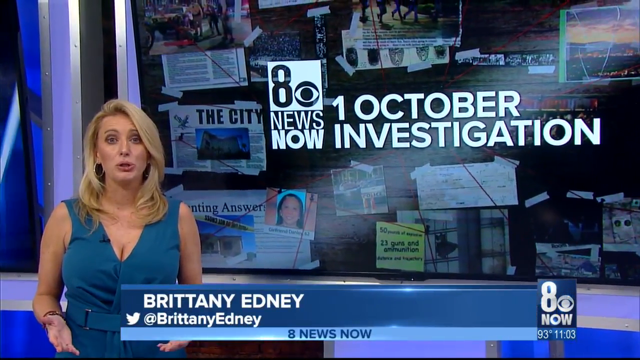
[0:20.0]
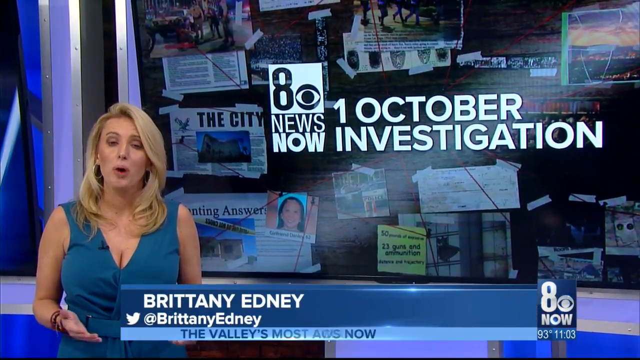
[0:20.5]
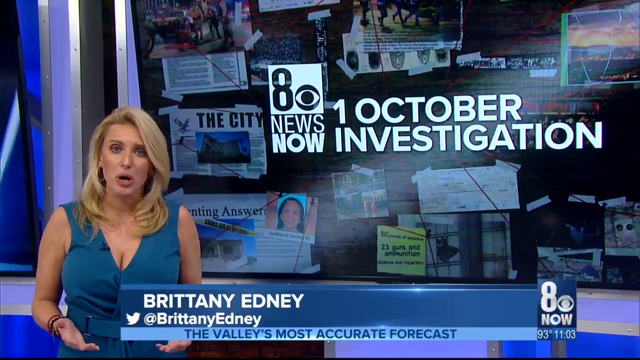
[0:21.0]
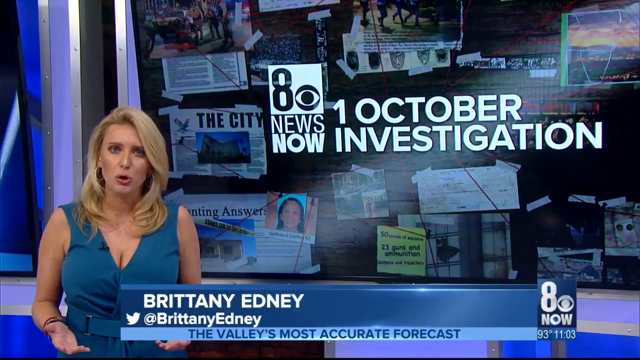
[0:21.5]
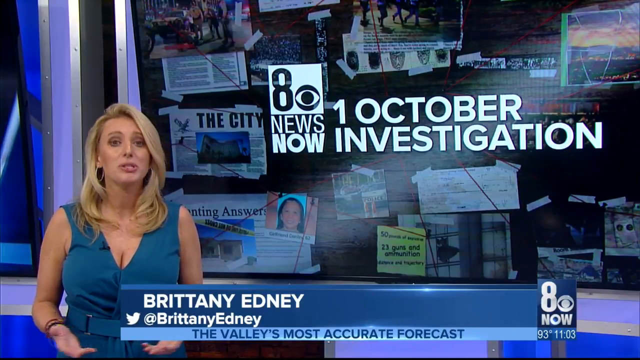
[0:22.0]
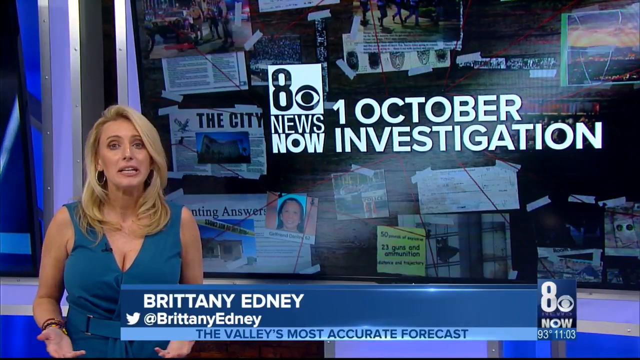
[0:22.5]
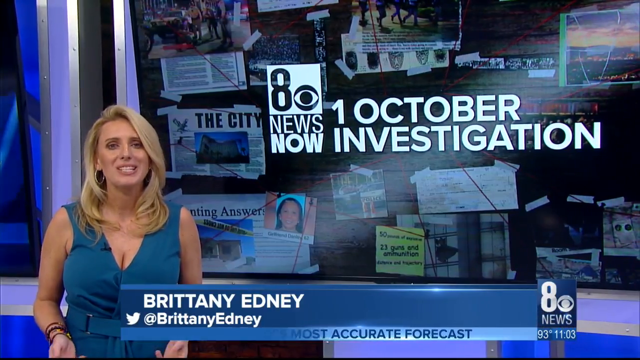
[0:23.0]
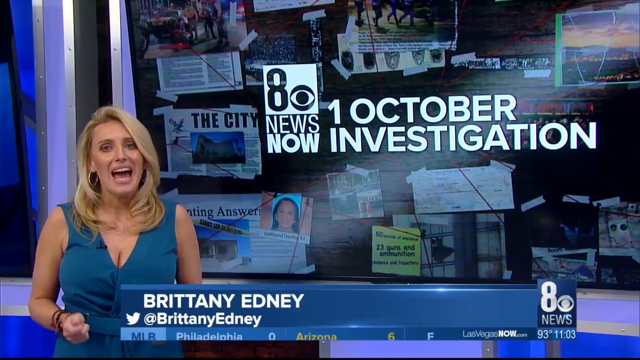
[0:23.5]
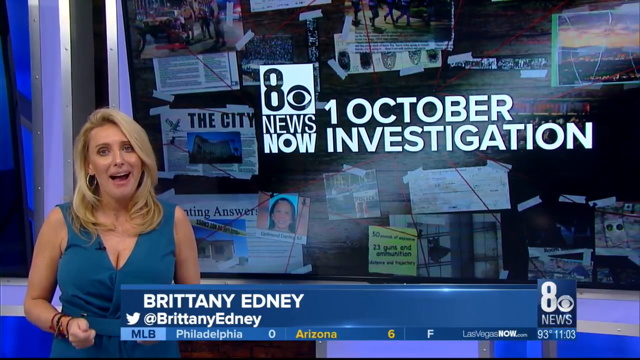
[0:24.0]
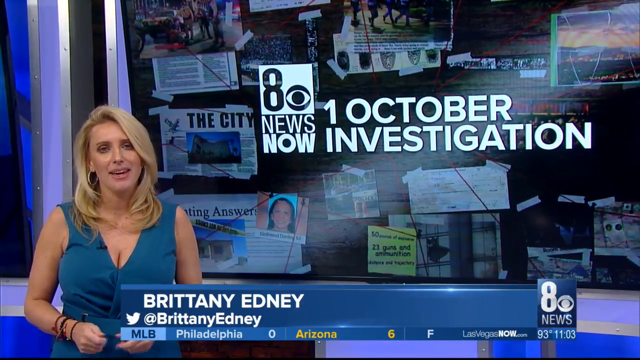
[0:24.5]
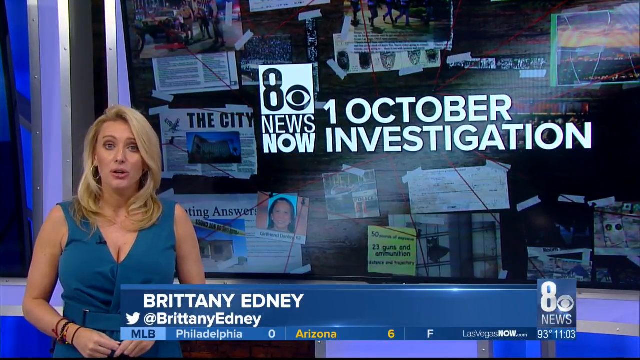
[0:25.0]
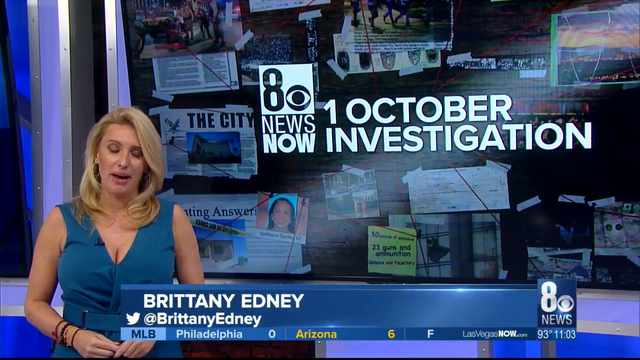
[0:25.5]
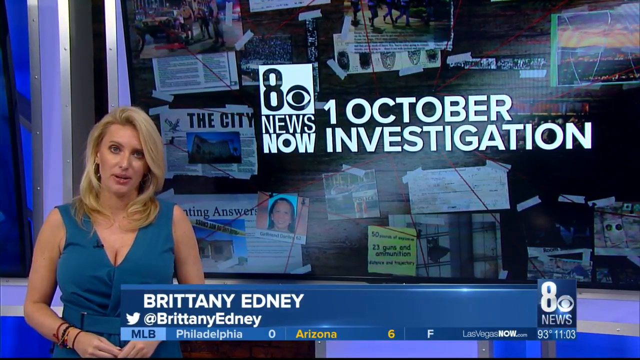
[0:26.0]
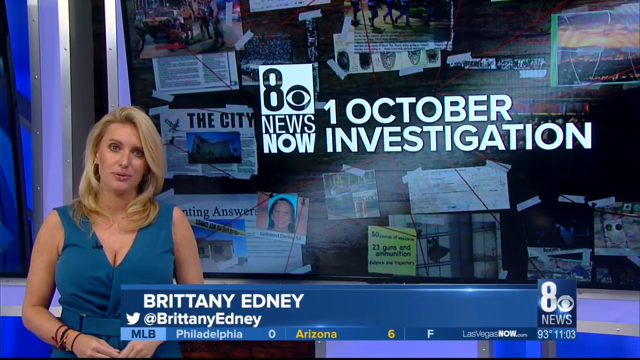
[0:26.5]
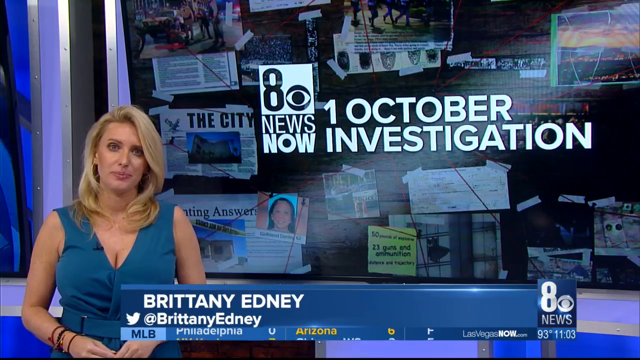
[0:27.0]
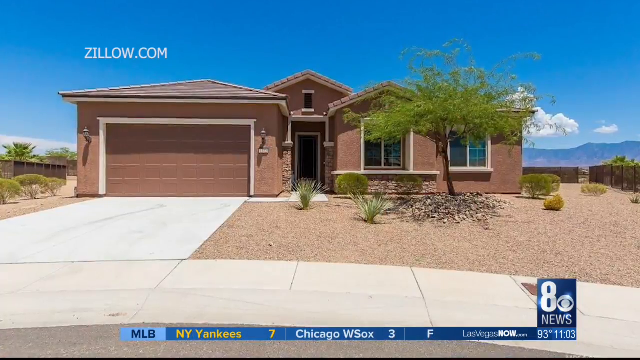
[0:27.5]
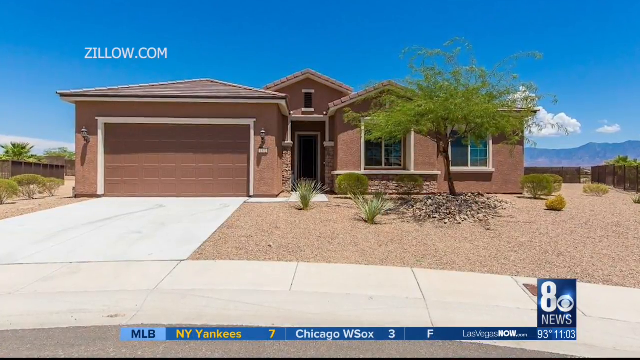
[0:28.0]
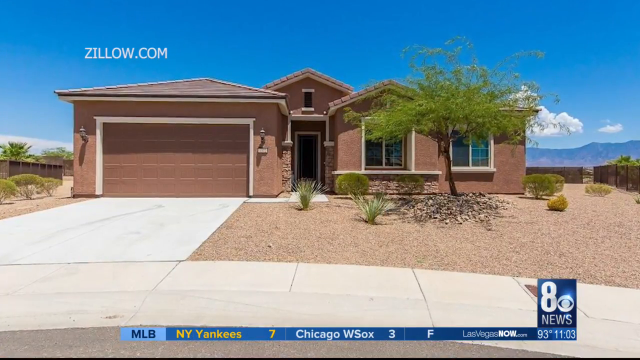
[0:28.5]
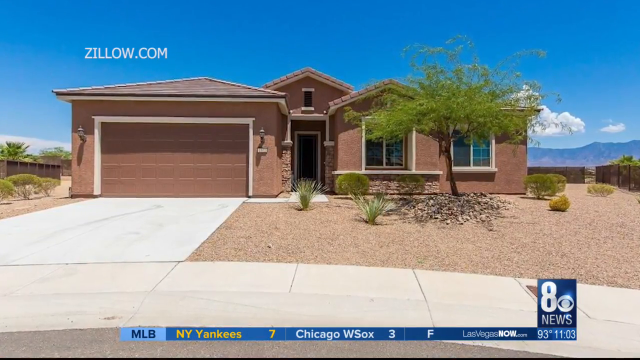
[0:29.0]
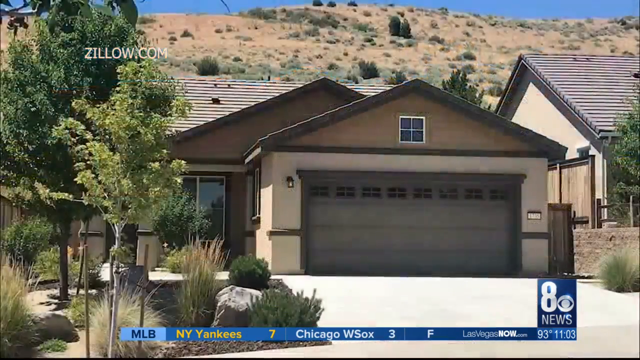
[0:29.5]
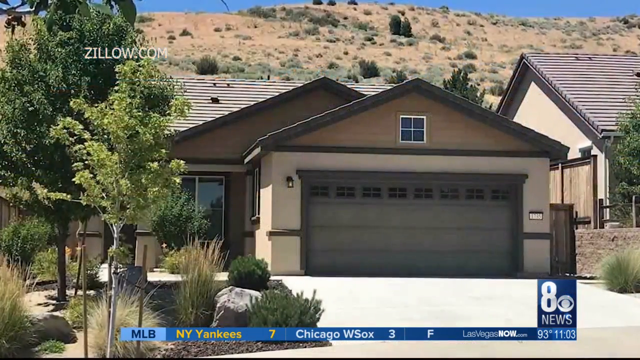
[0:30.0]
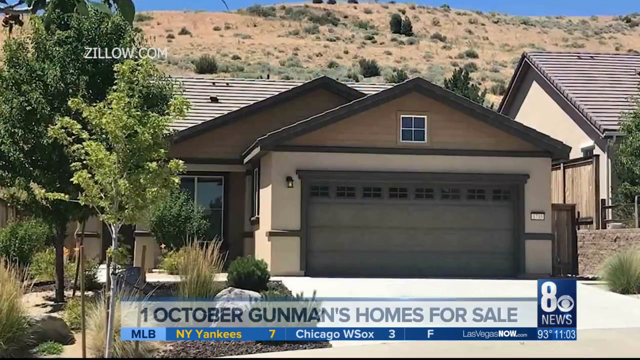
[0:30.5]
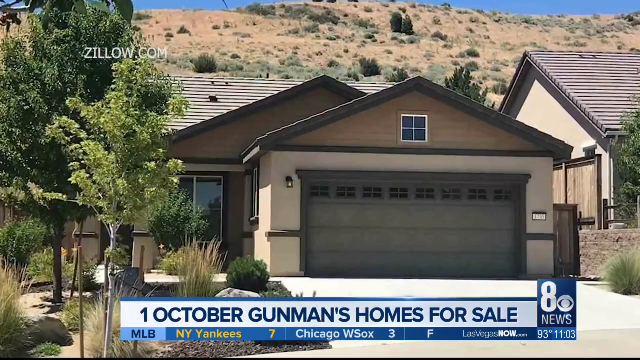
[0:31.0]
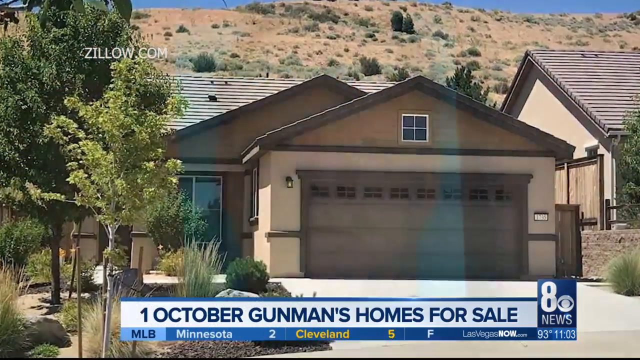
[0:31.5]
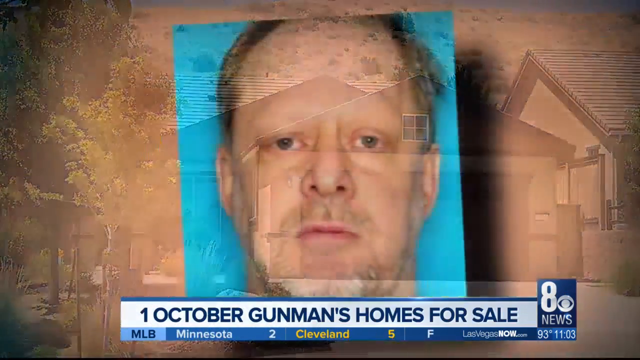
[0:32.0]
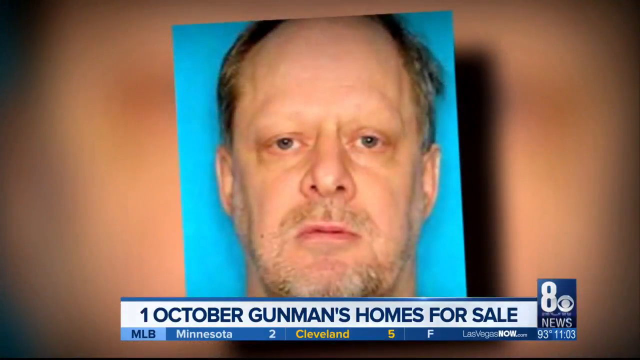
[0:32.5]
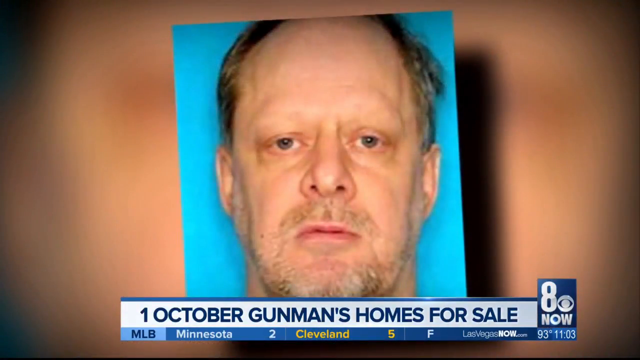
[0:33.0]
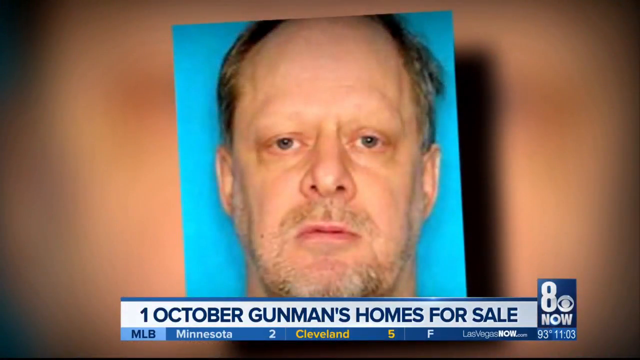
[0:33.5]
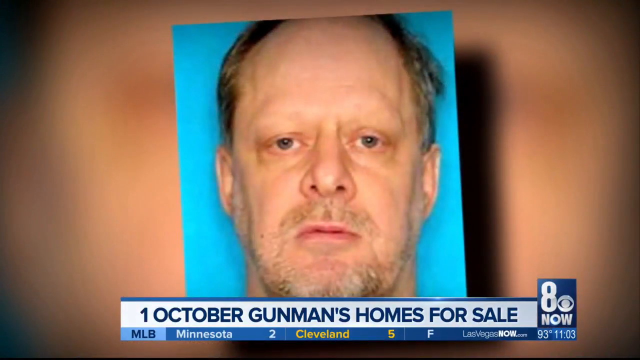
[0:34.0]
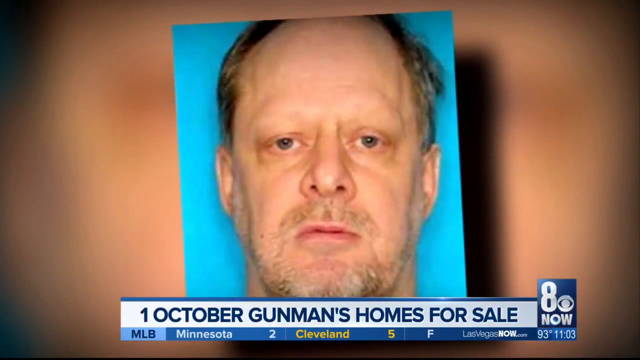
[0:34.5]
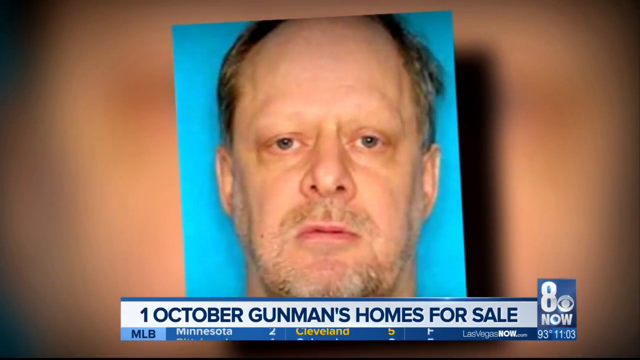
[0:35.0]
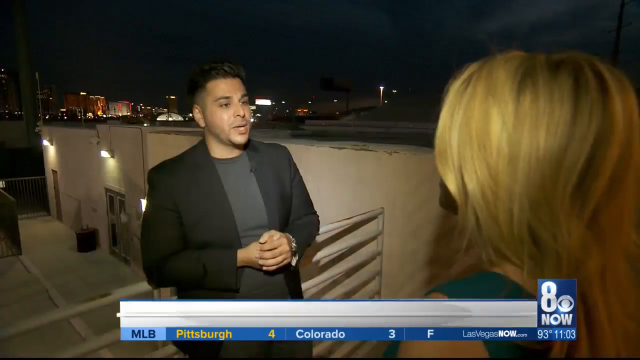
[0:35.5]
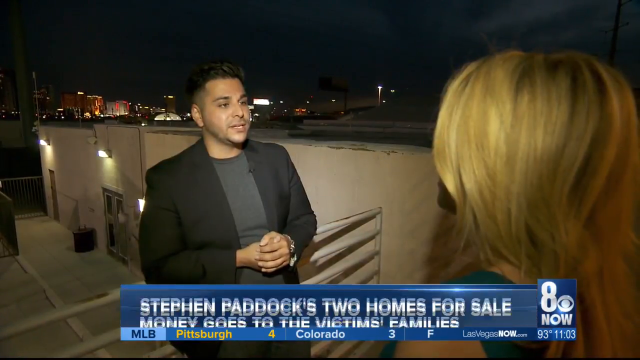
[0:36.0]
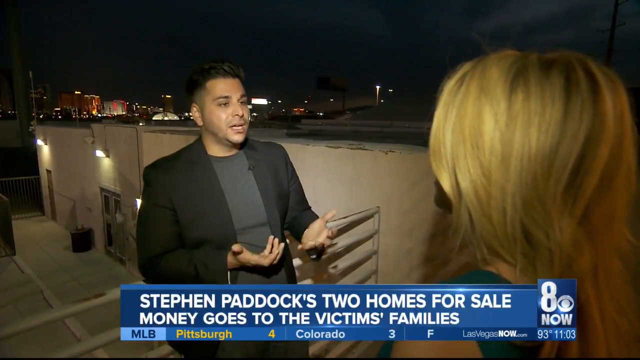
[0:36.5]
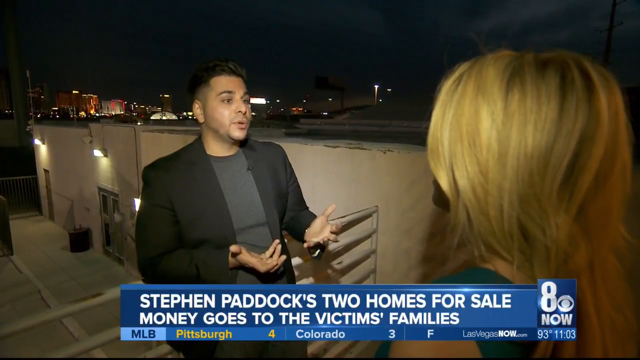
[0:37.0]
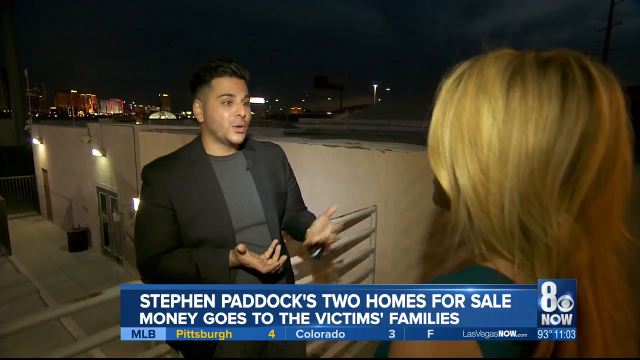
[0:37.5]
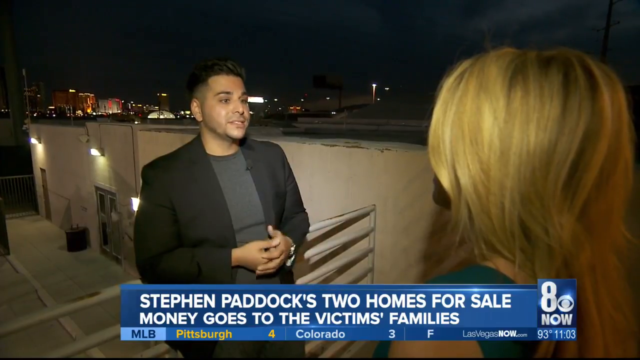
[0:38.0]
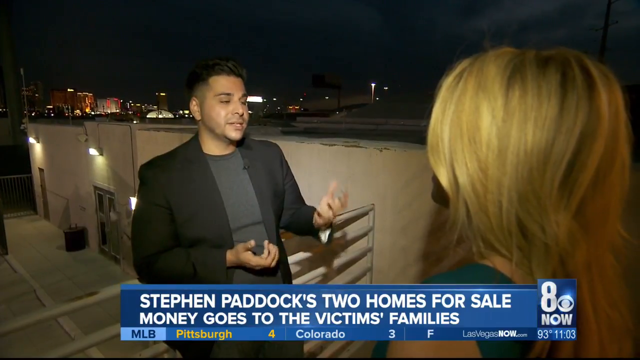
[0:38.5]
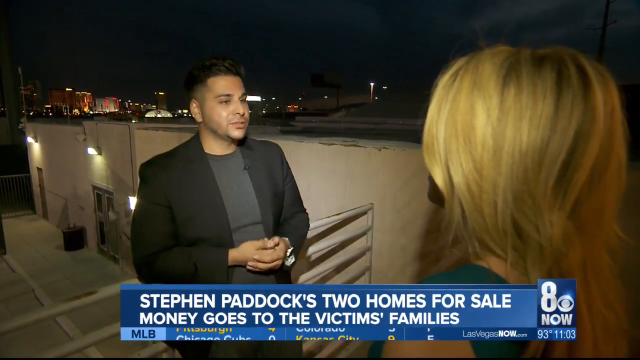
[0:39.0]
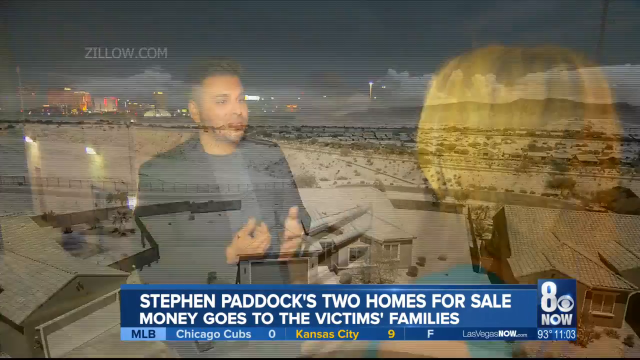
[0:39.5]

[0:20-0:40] In the newsroom, news reporter Brittany Edney appears with the Twitter handle "@Brittany Edney" underneath her name. On the right-hand side is "1st October investigation" and "news now". Brittany speaks. The scene changes to a home in an open area, with the link "zillow.com" in the top left. A banner at the bottom of the screen reads "1 October, gunman's homes for sale", and a mugshot of a person is shown. Another scene follows in which a reporter facing away from the camera speaks to an individual who faces the reporter rather than the camera. Throughout, various news items move across the bottom of the screen.